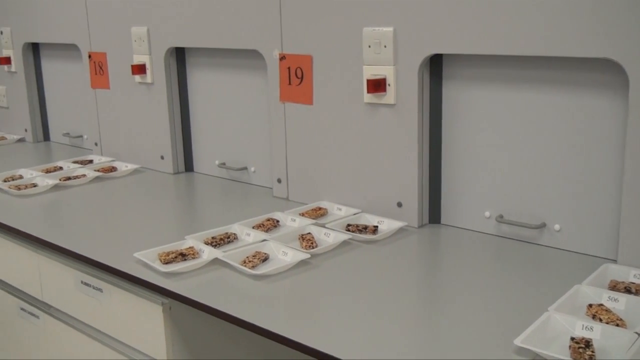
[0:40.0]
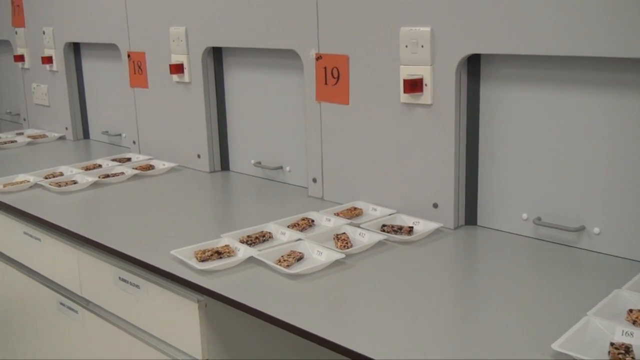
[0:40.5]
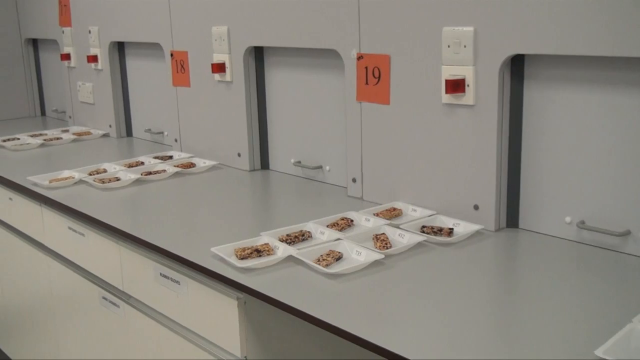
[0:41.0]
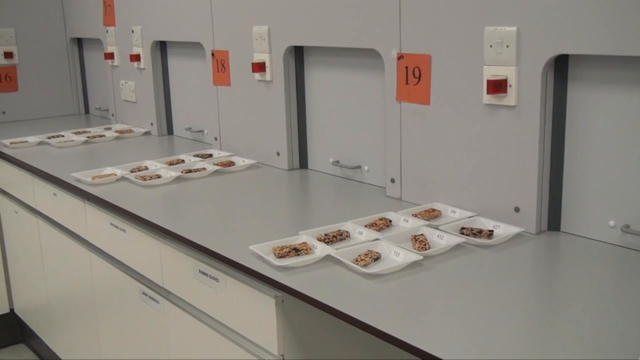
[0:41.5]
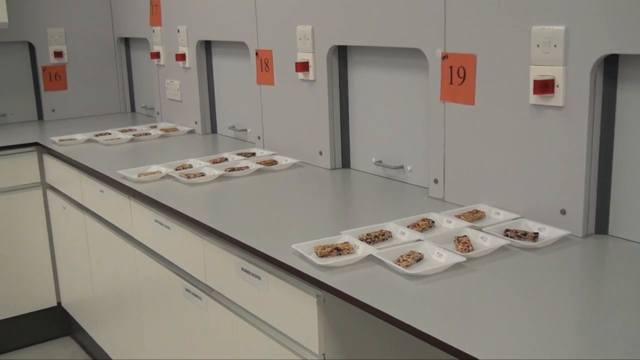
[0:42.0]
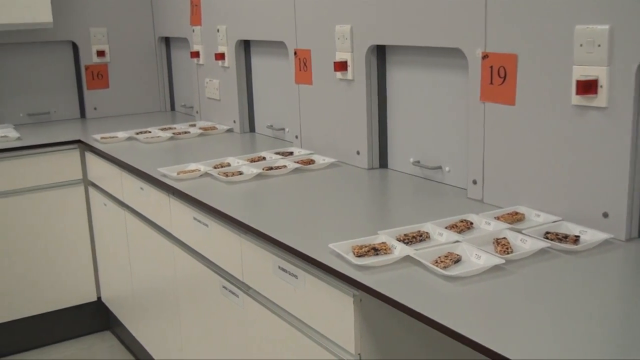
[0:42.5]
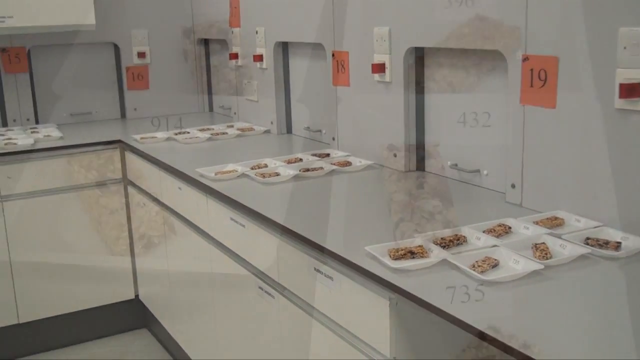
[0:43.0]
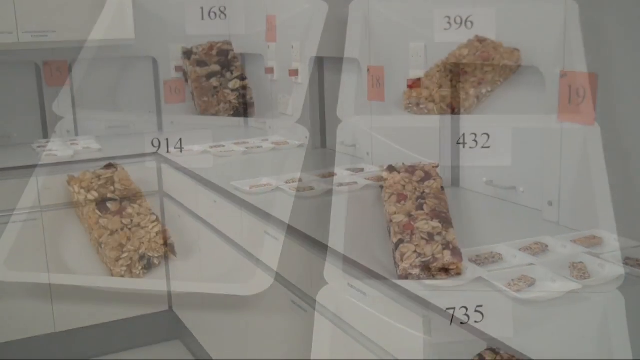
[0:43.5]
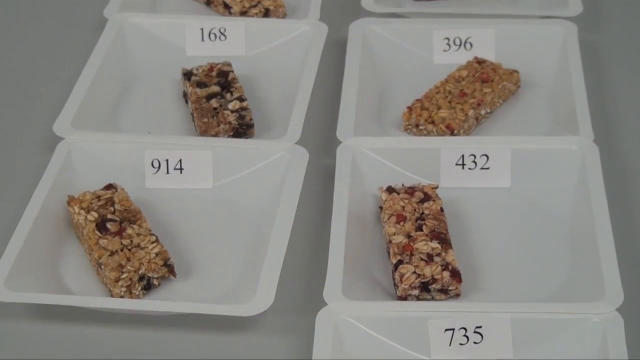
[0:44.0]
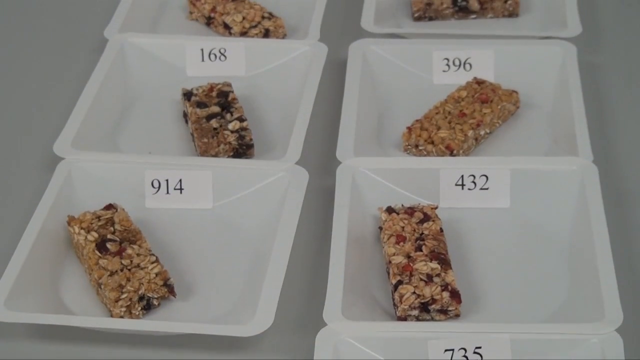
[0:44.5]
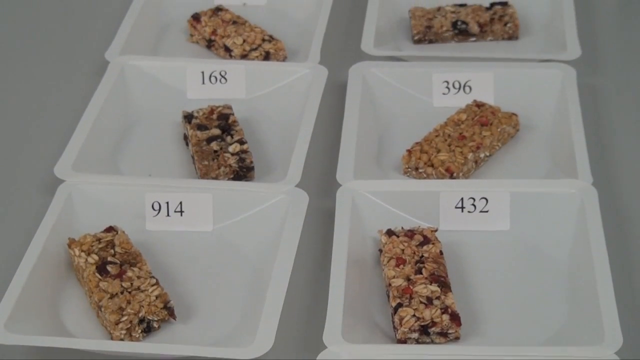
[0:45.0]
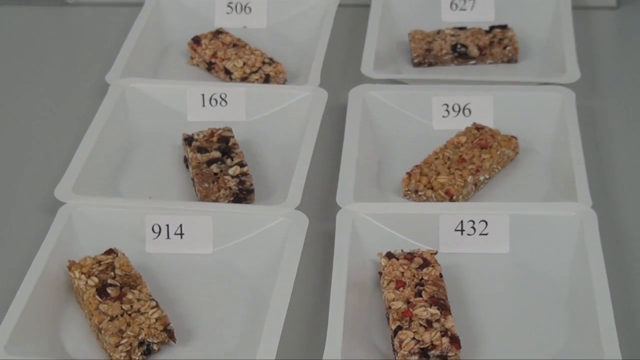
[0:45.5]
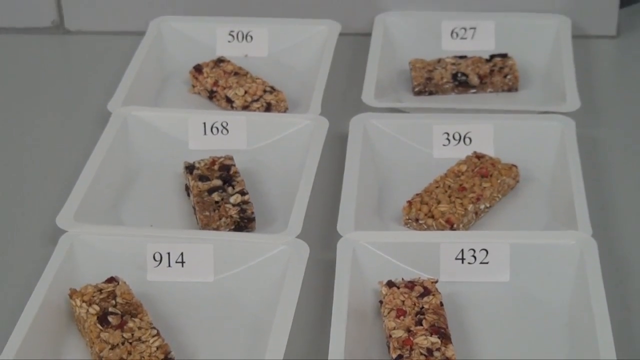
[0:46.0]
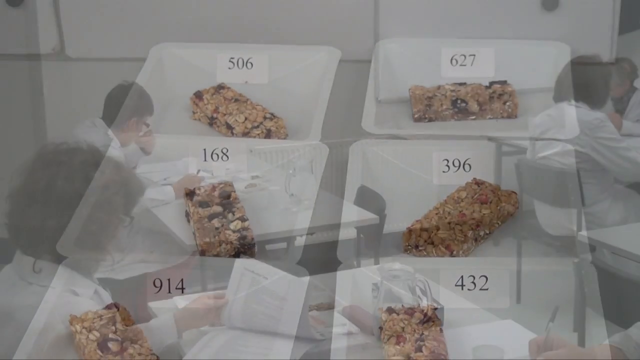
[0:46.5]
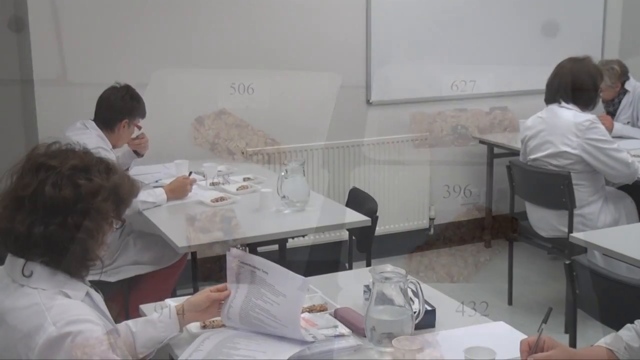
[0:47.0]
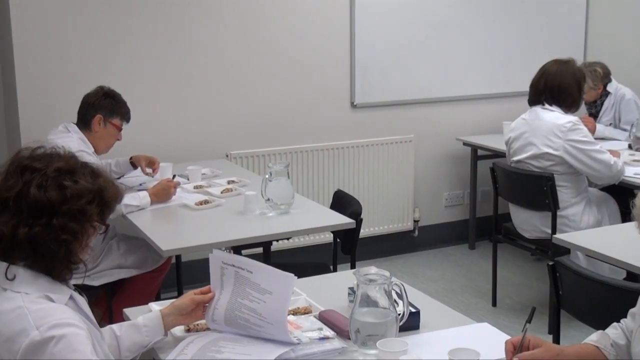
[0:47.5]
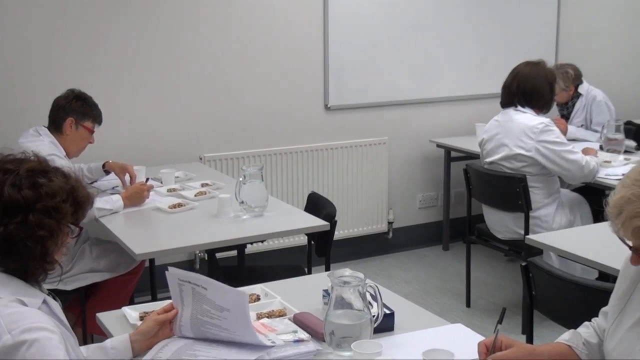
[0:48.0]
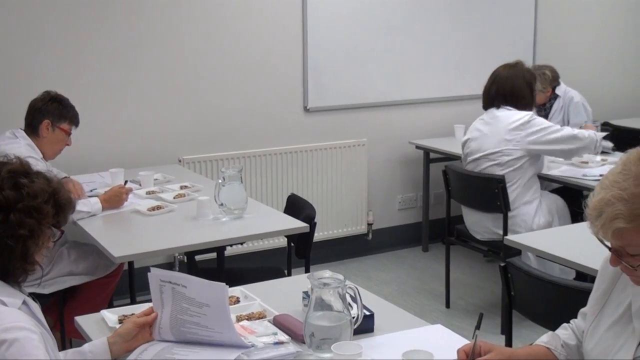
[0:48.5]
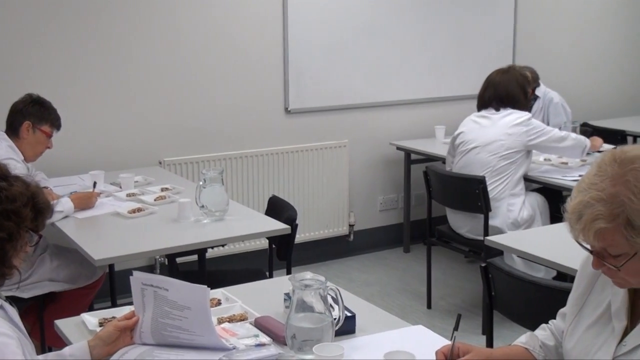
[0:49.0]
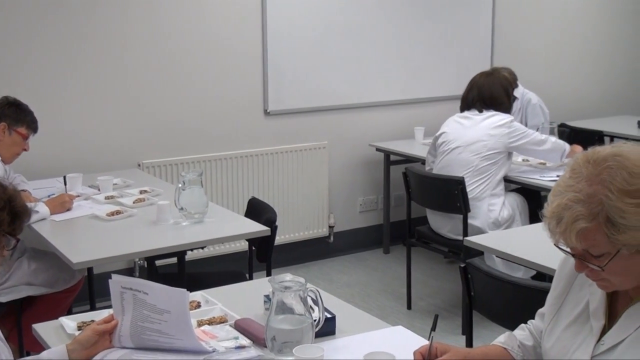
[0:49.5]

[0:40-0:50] There appear to be numbers on the wall, including 19, written in black on orange papers. There is also what looks like some switches and something red, and there are doors with handles, currently closed, that look like they can be opened, the kind that open upward like garage doors. Some samples appear, apparently food samples that look like wheat pigs with raisins. There are a couple of them, each with a different number, such as 432 and 168, and they visibly differ in texture.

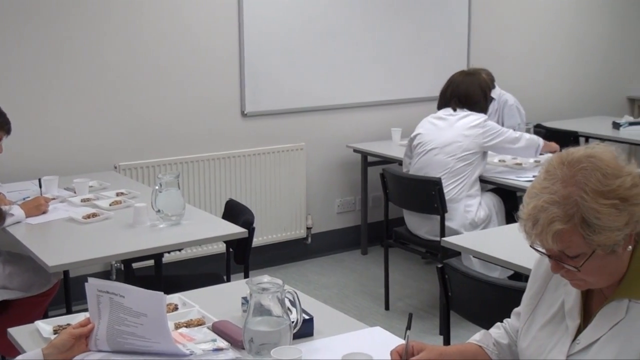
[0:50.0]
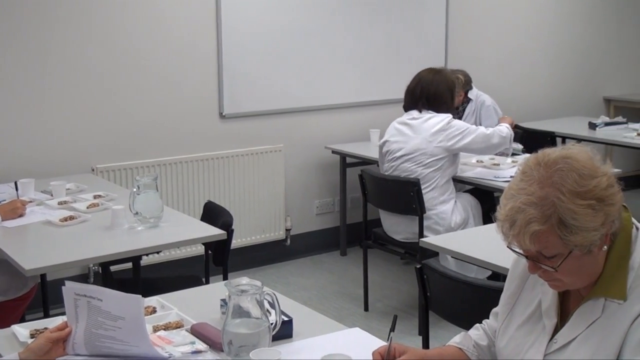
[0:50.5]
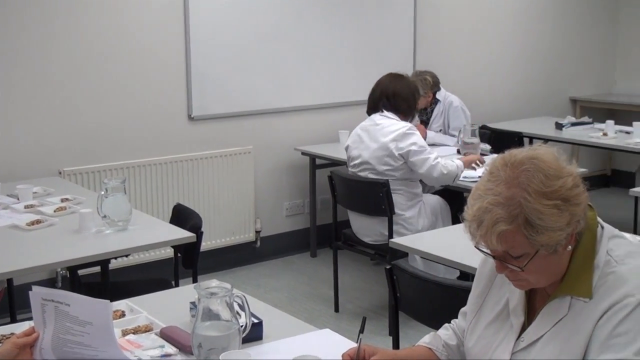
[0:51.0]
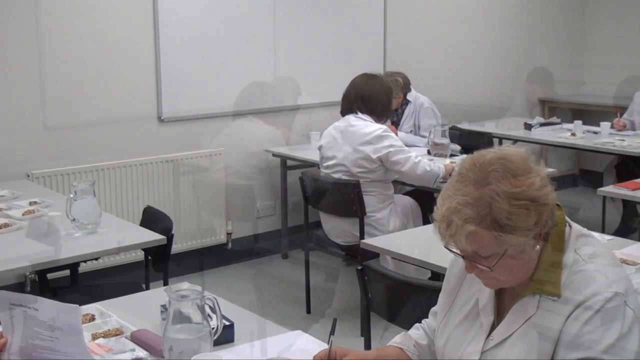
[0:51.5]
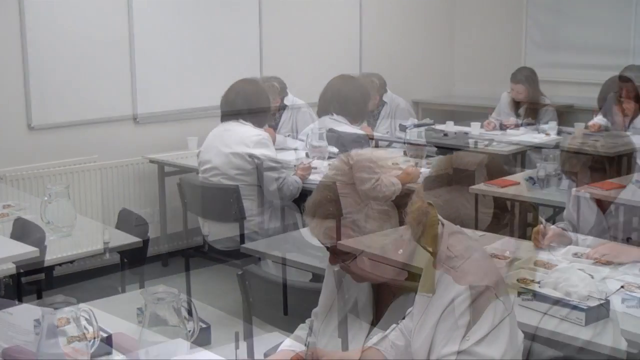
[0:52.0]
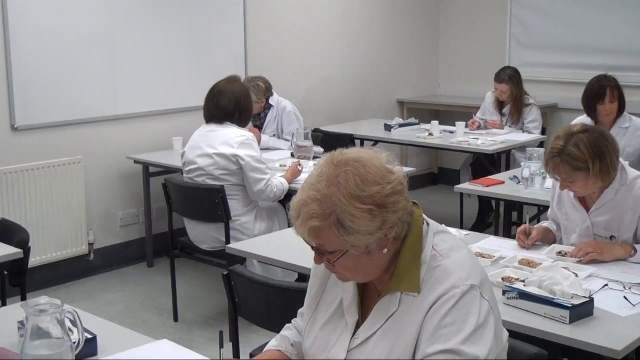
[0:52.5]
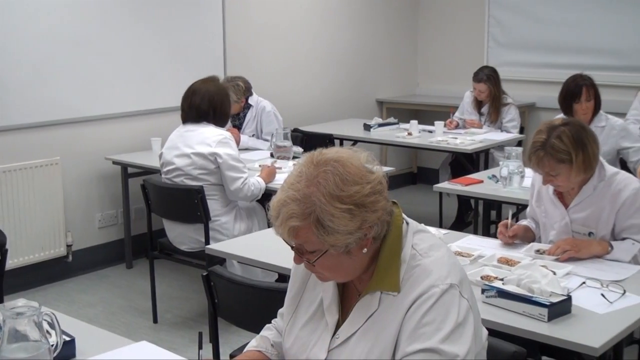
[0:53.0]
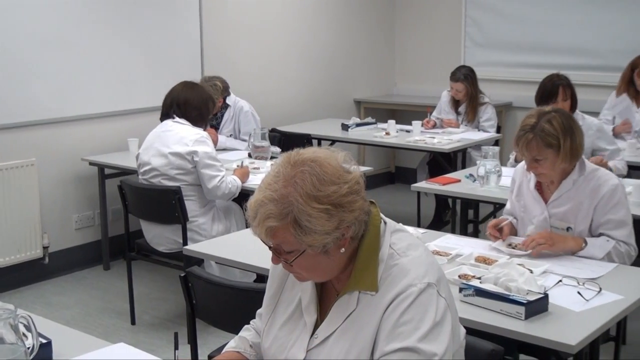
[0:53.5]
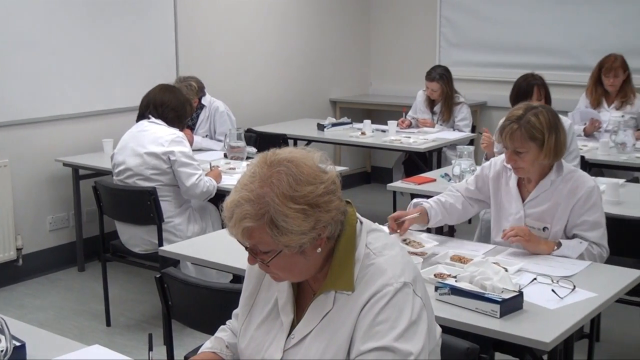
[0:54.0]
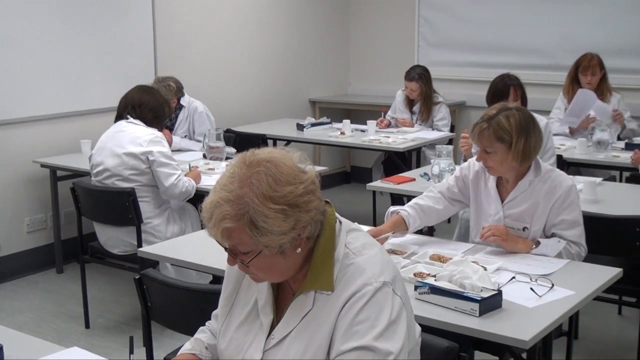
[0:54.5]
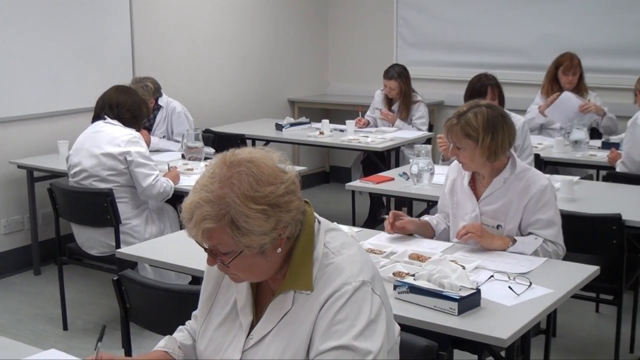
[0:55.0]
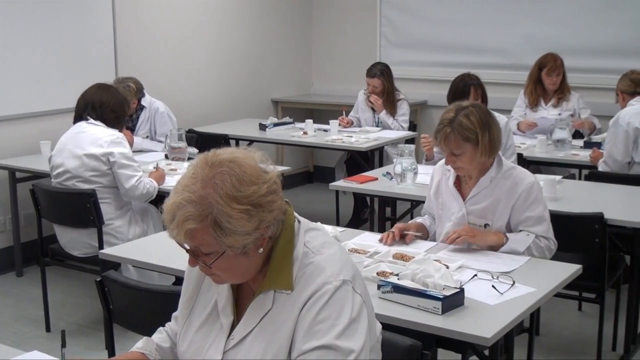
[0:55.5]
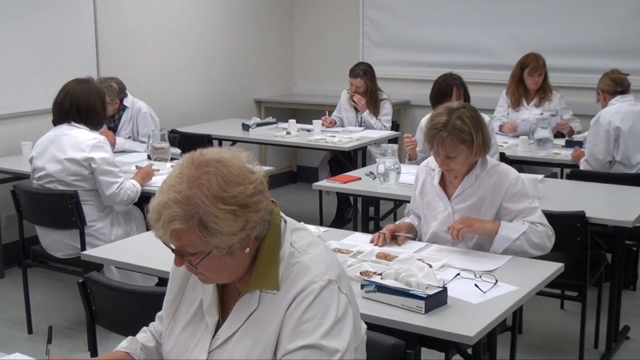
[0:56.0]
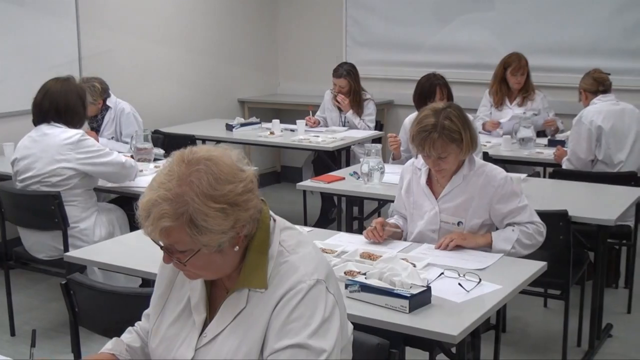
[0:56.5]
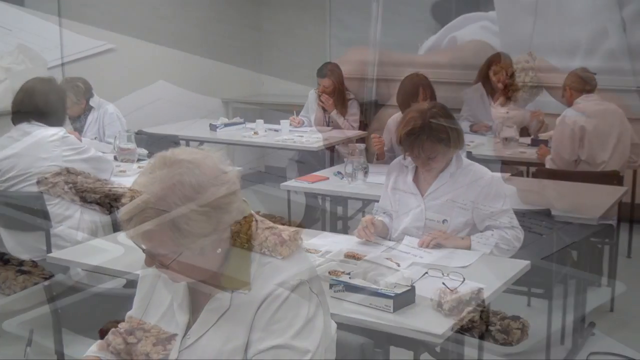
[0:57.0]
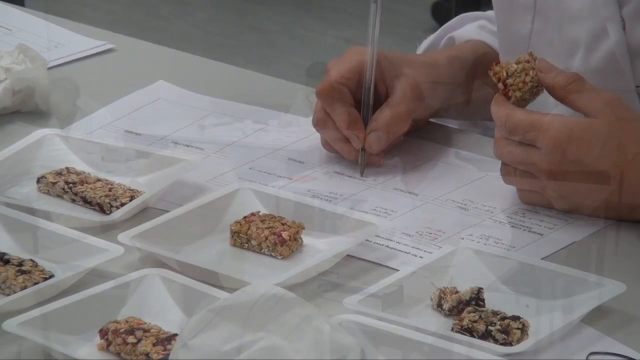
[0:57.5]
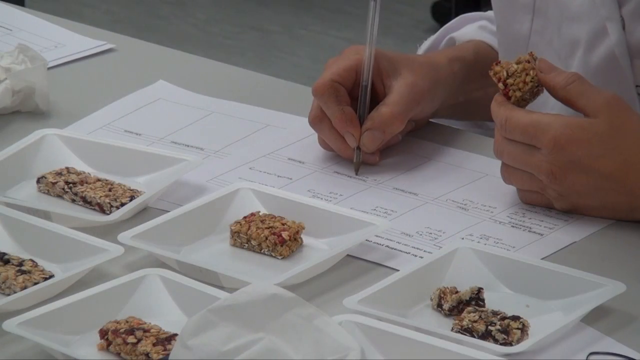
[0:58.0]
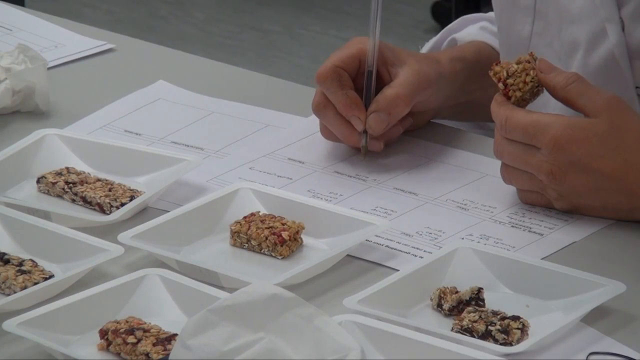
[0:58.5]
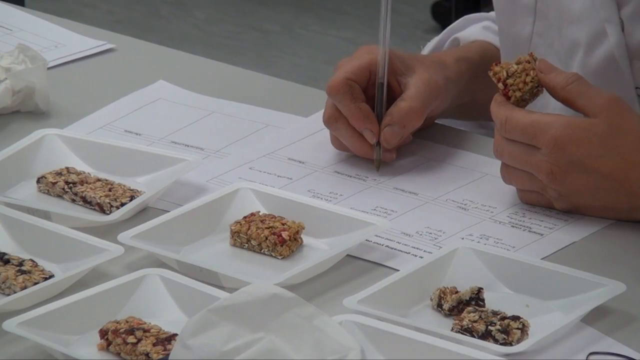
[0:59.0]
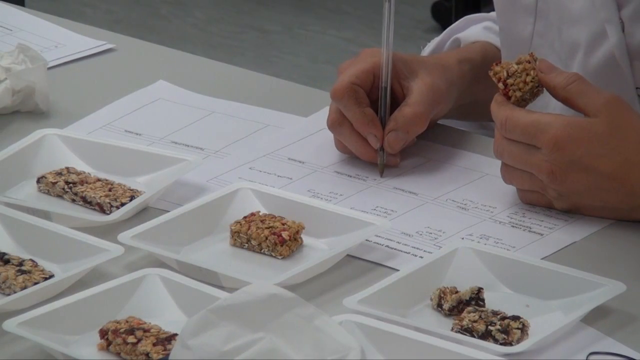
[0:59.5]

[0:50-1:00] Everyone appears to have their own sample of this food, which seems to look like wheat pigs; some of the samples look old. A woman with blonde hair and silver earrings, who looks to be in her 50s, is writing and concentrating. Everyone appears to have their own table, though one person is seated facing someone else. The atmosphere seems tense and serious, almost like an exam. One woman holds a piece of the food, and they are writing while holding it.